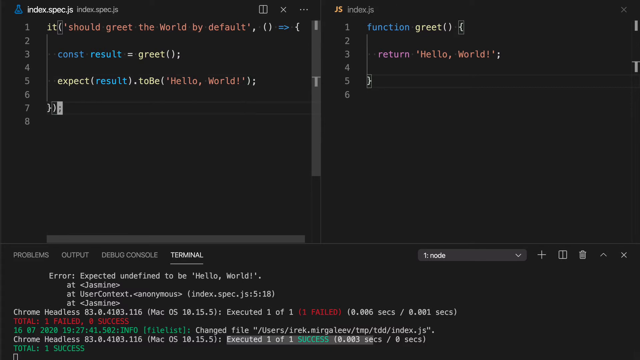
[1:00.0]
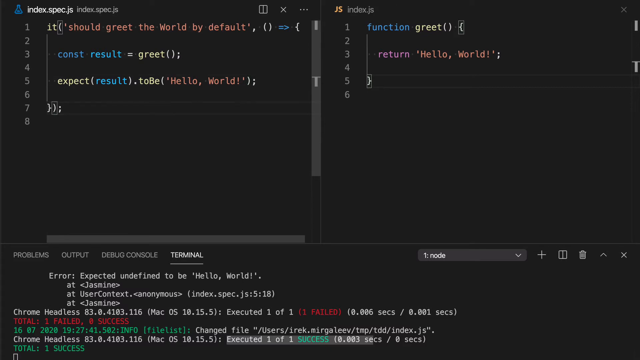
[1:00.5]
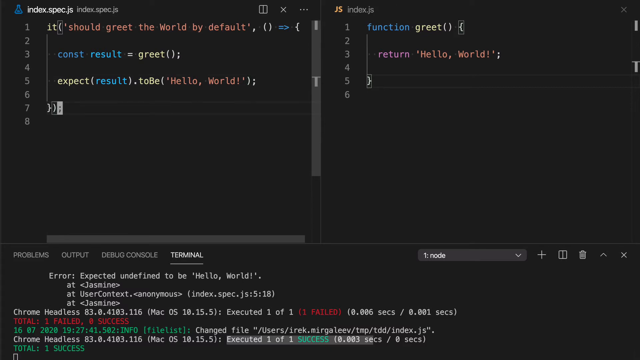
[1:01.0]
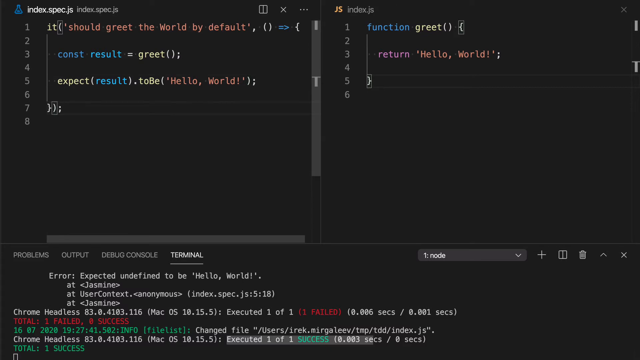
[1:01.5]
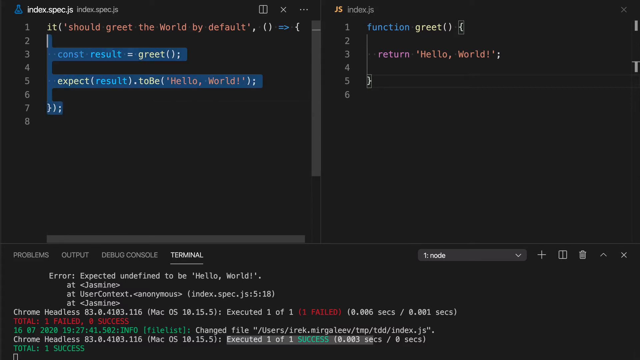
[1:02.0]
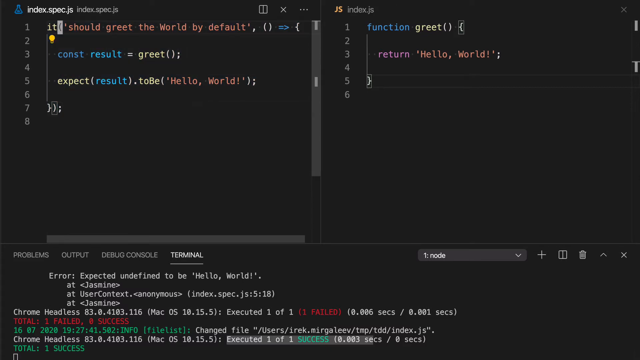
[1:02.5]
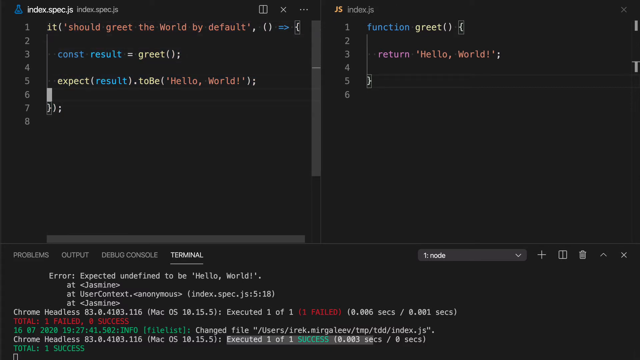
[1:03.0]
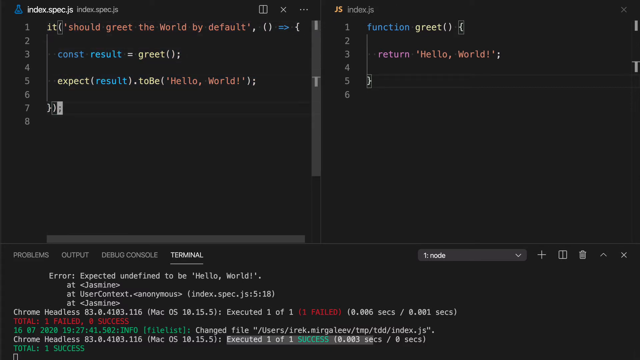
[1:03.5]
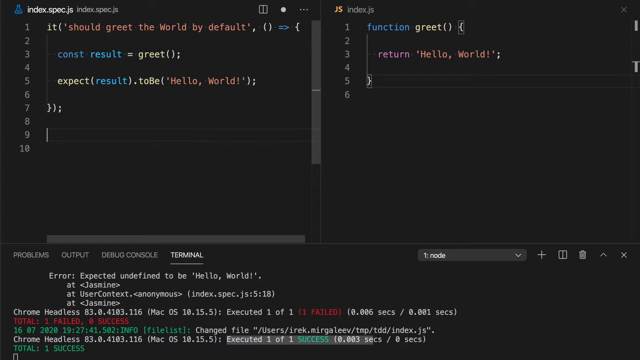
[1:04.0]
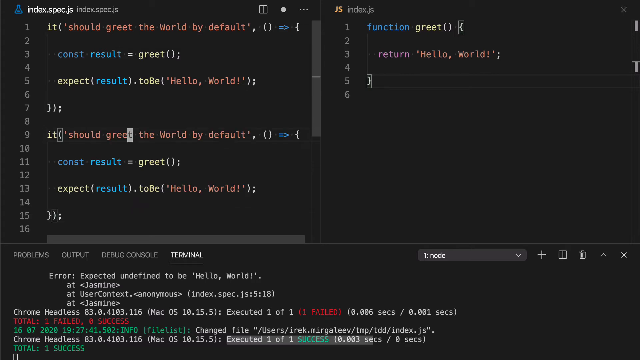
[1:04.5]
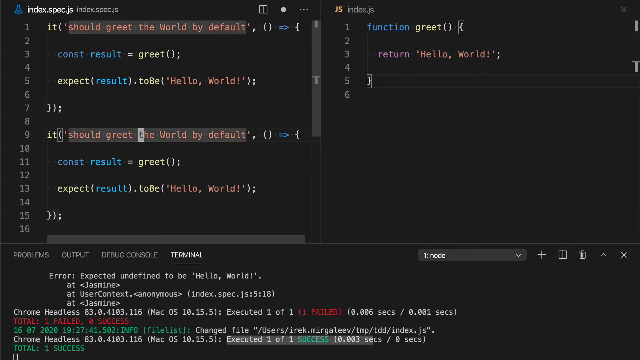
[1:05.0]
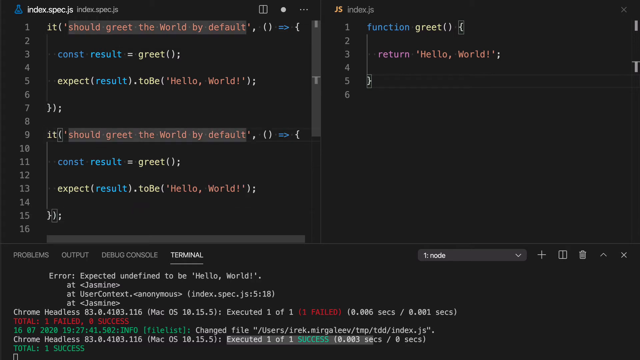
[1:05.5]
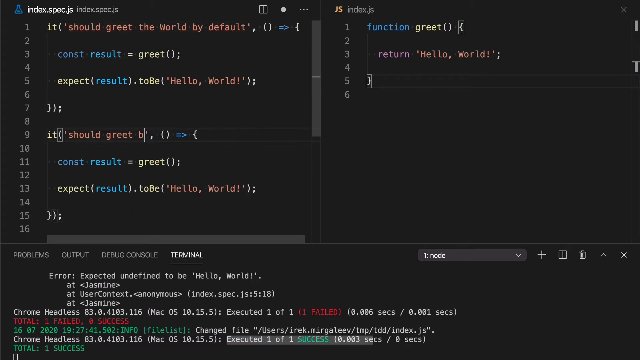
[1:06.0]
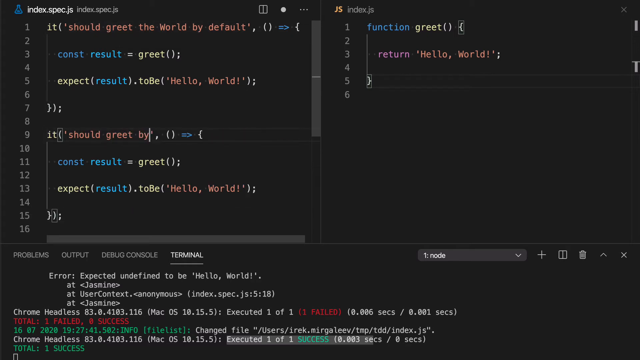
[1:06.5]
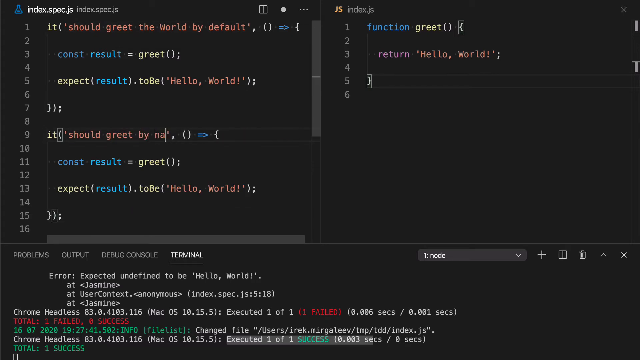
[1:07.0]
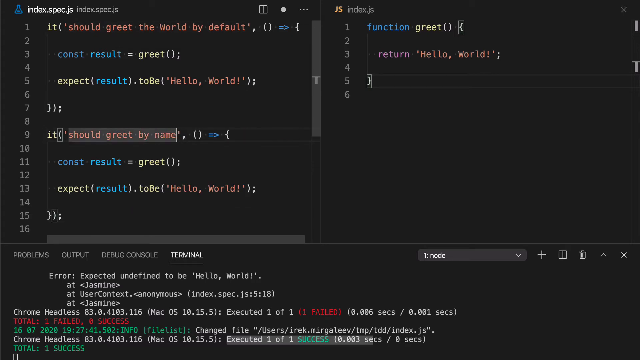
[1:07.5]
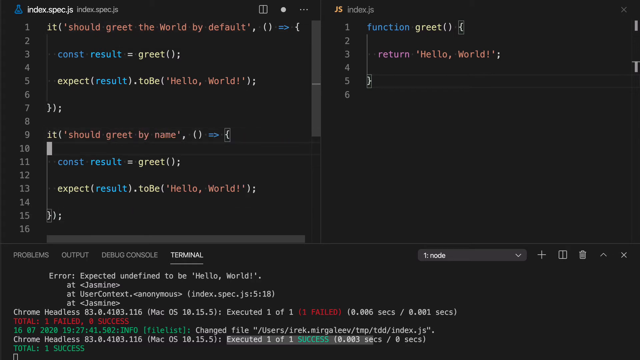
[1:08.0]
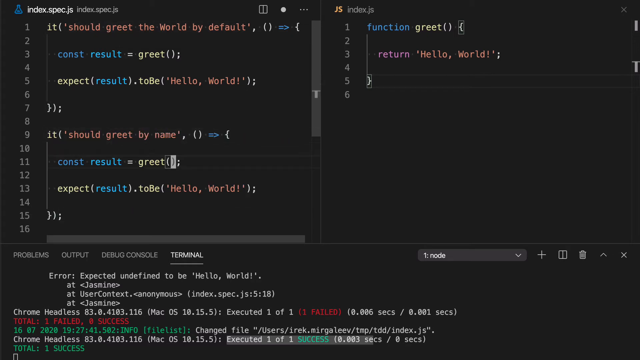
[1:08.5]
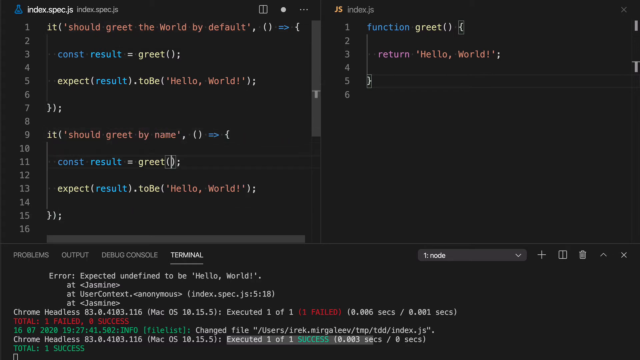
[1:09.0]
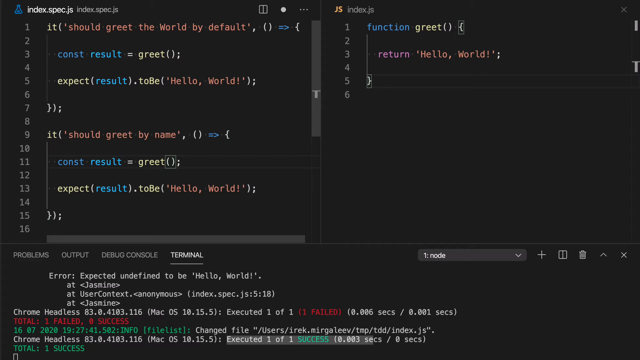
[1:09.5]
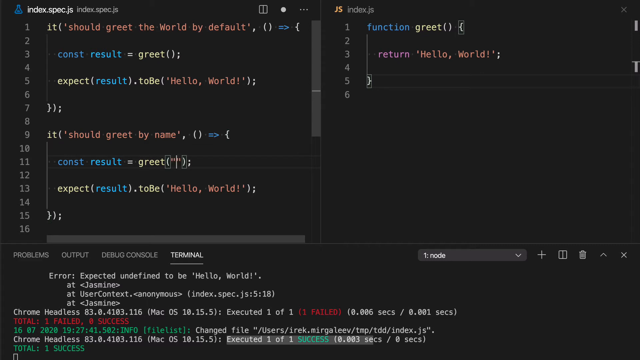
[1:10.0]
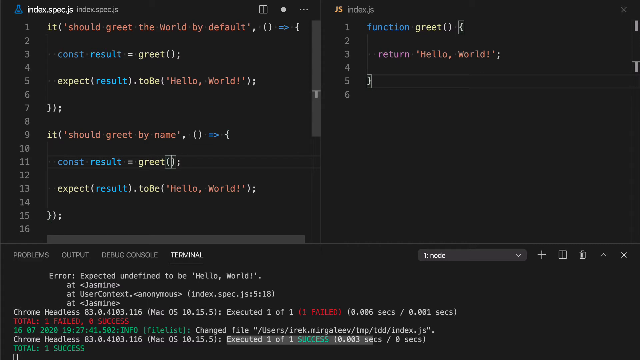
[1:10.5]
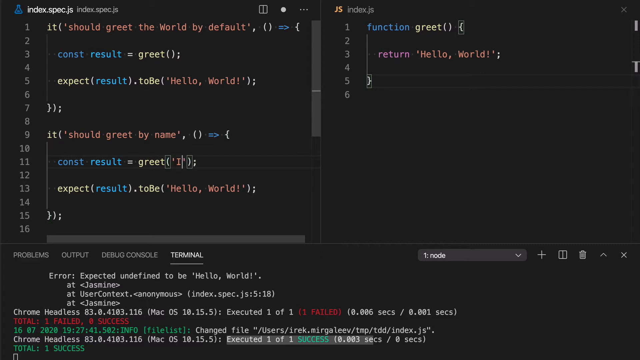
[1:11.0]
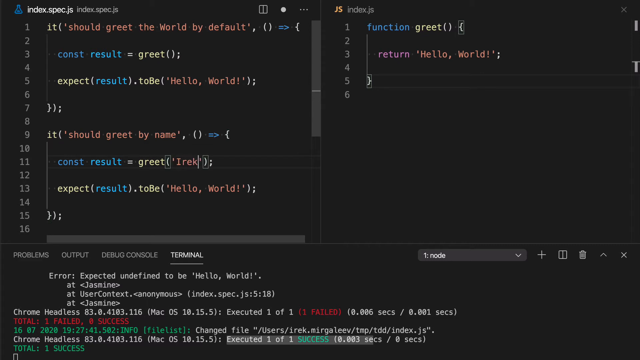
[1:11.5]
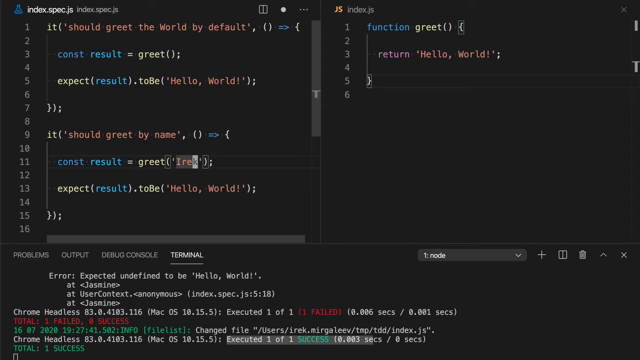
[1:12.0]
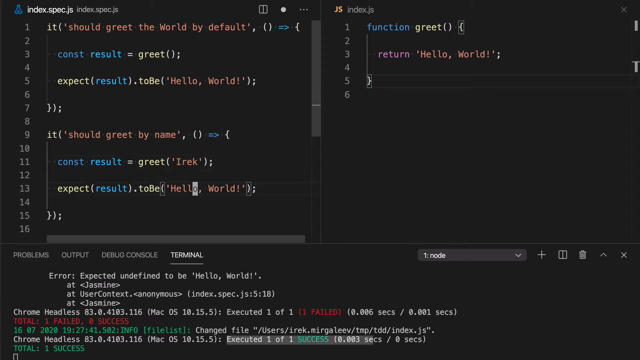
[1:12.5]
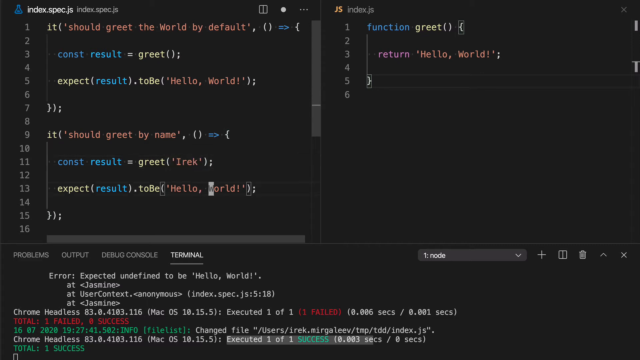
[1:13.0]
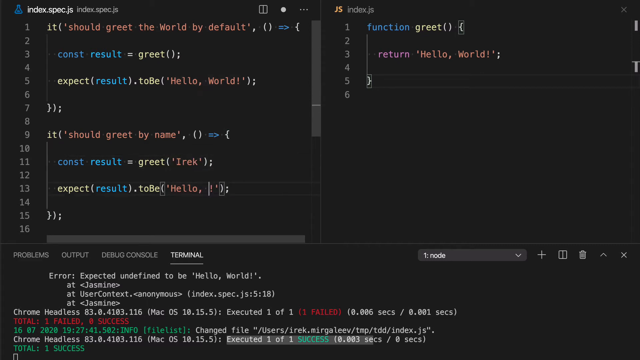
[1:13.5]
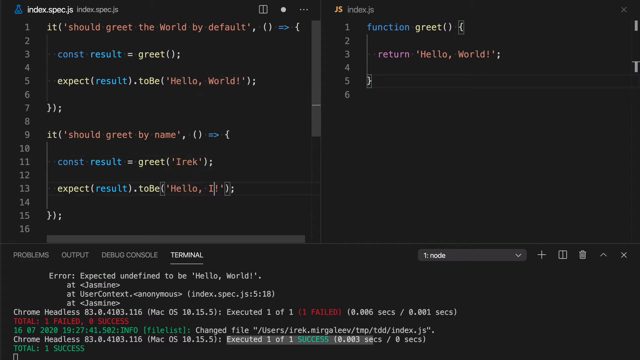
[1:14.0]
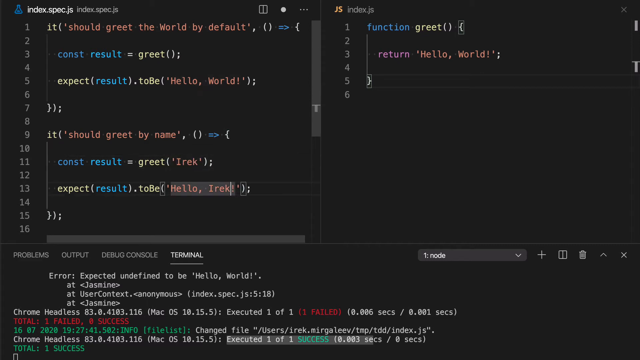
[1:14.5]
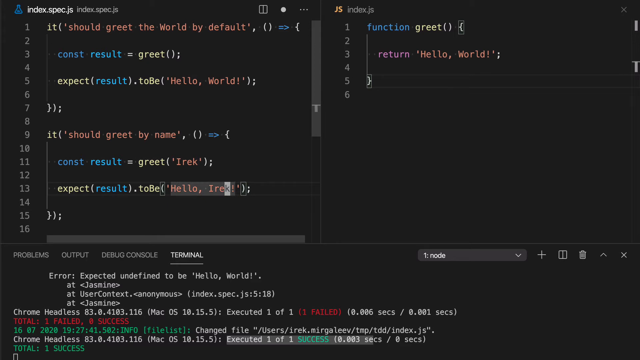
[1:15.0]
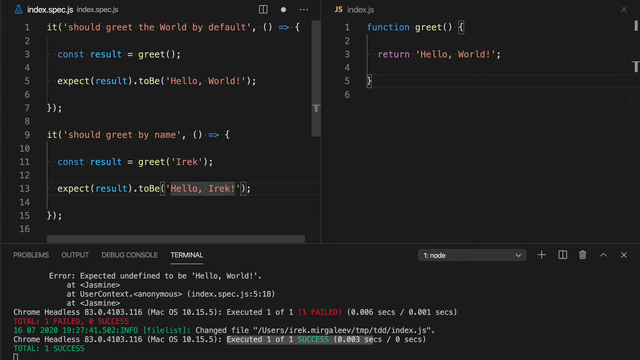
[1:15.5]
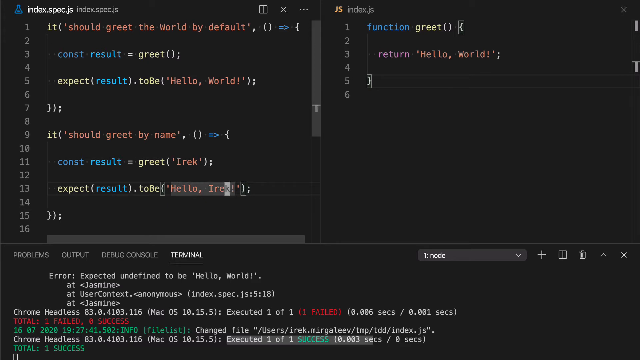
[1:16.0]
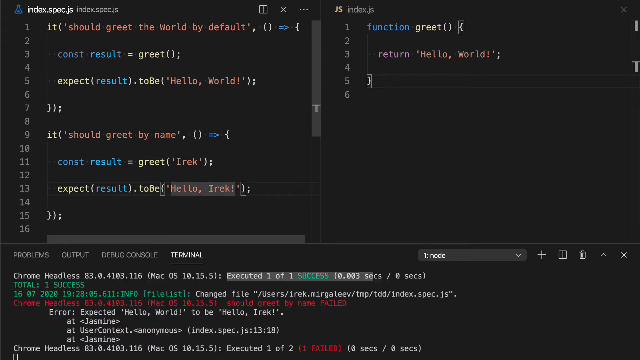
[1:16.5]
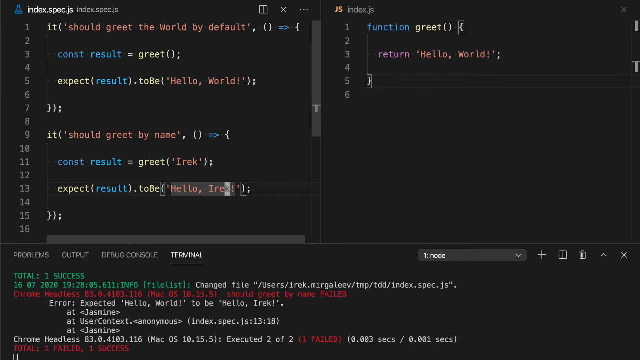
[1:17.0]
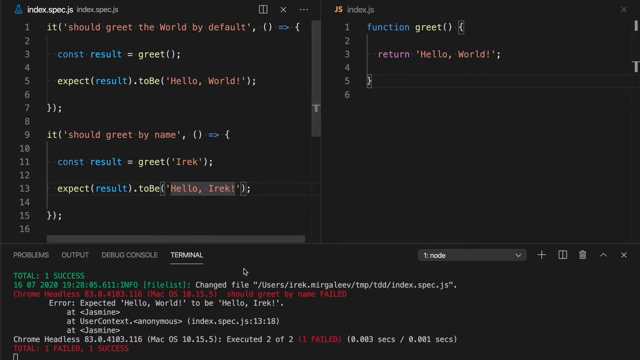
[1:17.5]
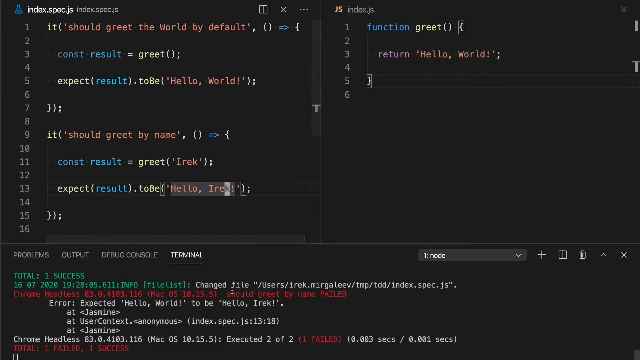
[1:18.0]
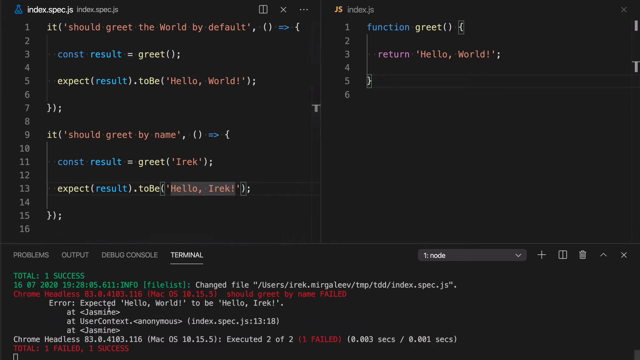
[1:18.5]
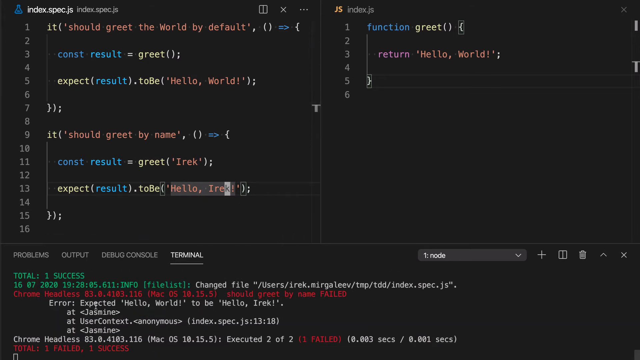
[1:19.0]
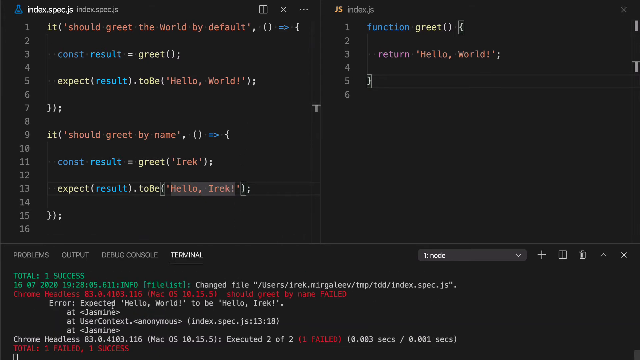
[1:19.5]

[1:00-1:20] The black screen still shows program writing. "should greet the world by default" is in a purple-orange or orange-red color, "constant result" is blue and "equal greet" is white. "function" is in blue, and "greet" is in yellow on the right side. The person types more code, including "should greet by name" in a reddish color, and "IREK" and "hello IREK", possibly a message to somebody. Other writing is in different colors. At the bottom, "error expected" is underlined, followed by "to be hello world". Words such as "Jasmine", "user context", "return hello world" and "function greet" also appear.